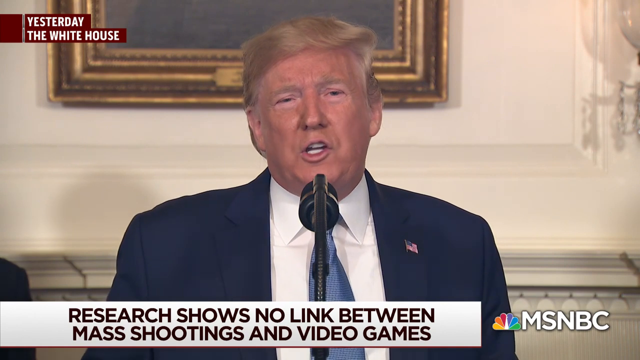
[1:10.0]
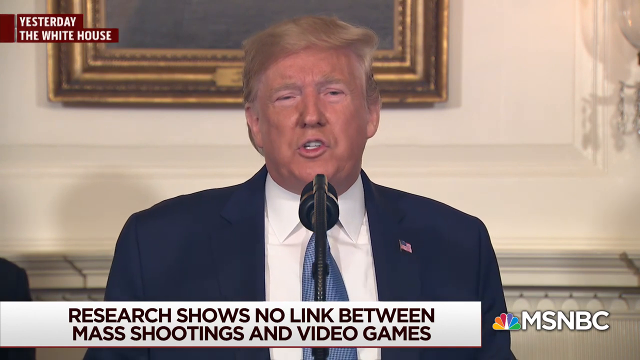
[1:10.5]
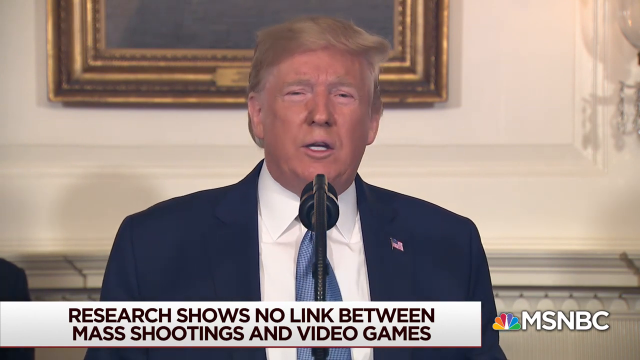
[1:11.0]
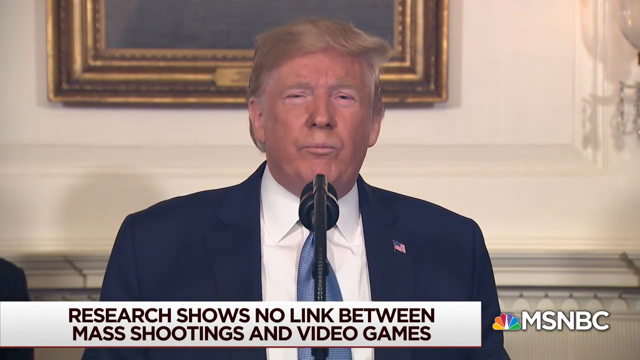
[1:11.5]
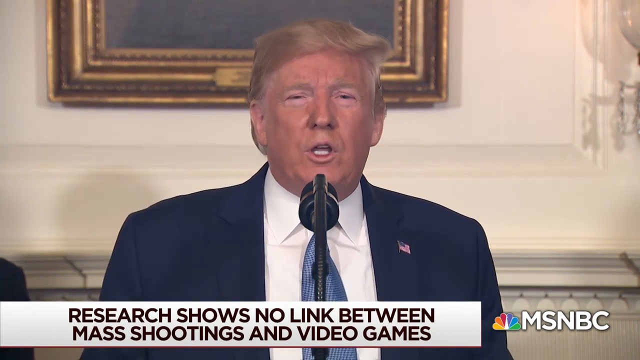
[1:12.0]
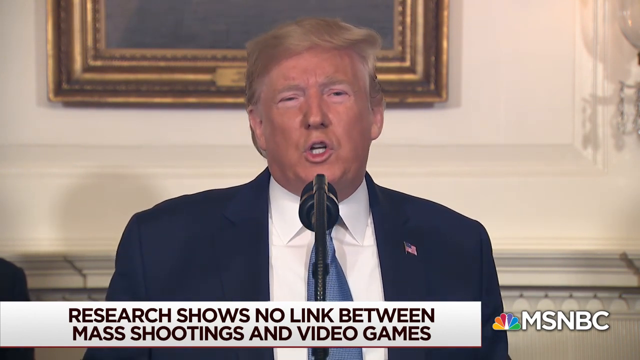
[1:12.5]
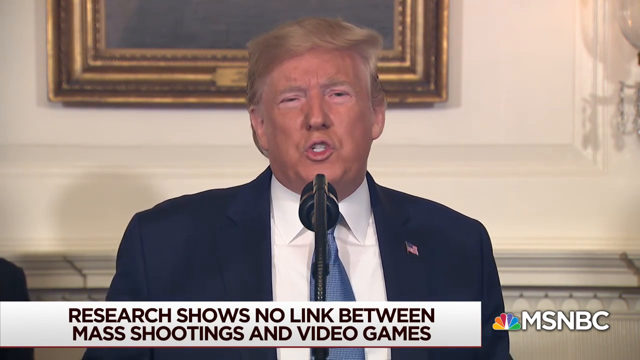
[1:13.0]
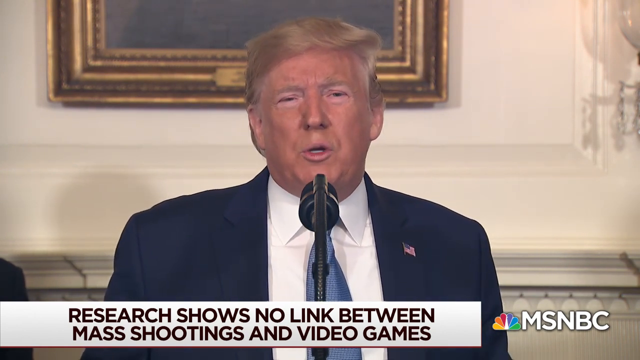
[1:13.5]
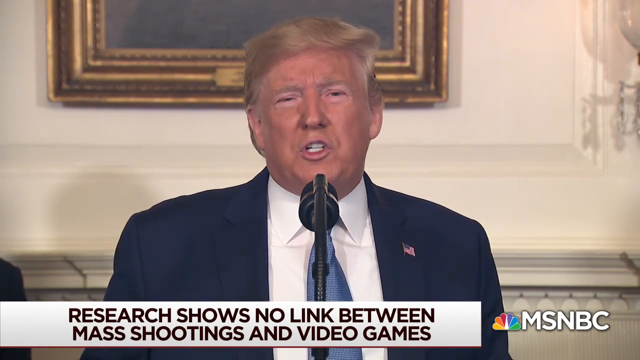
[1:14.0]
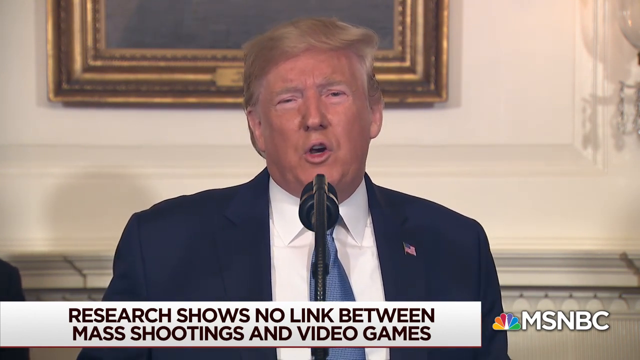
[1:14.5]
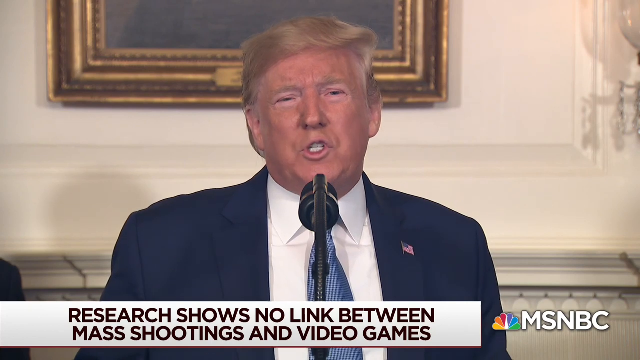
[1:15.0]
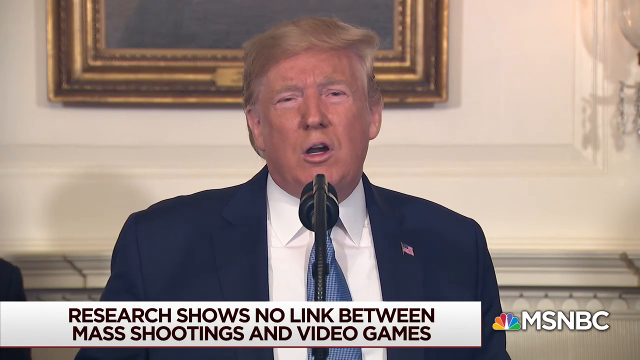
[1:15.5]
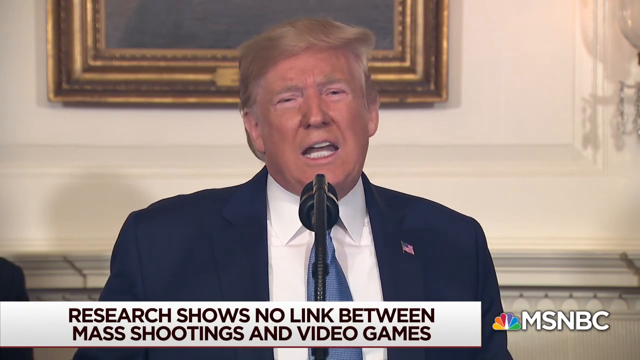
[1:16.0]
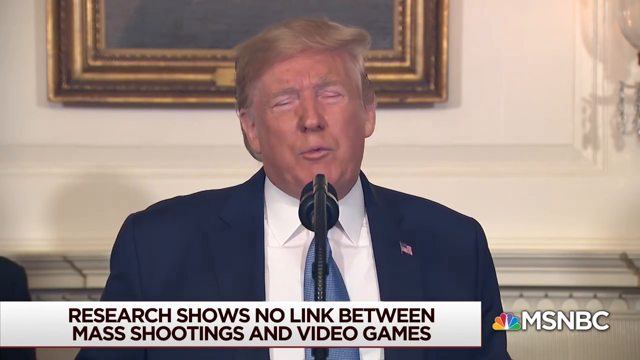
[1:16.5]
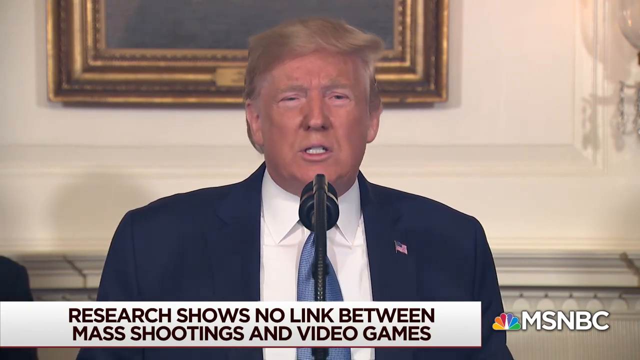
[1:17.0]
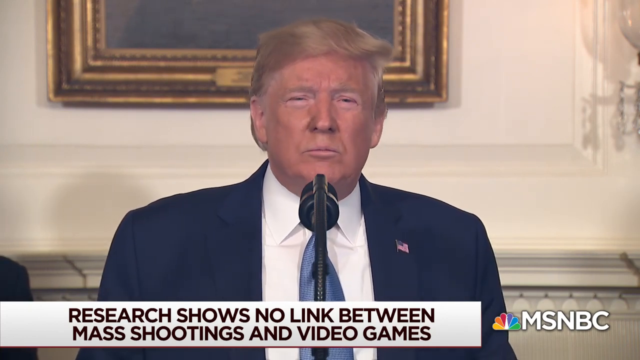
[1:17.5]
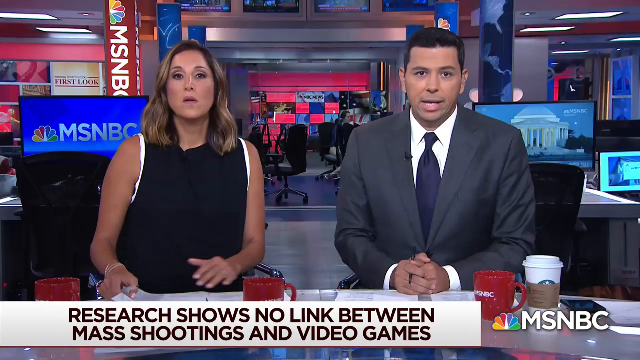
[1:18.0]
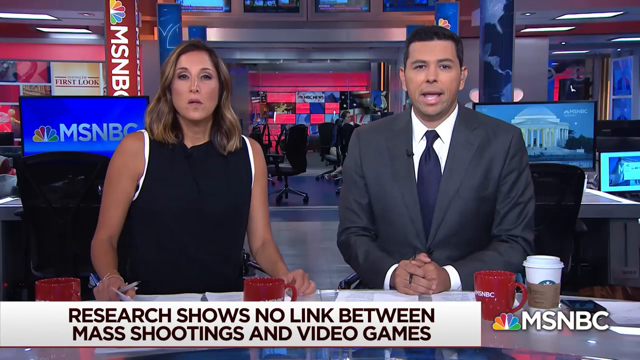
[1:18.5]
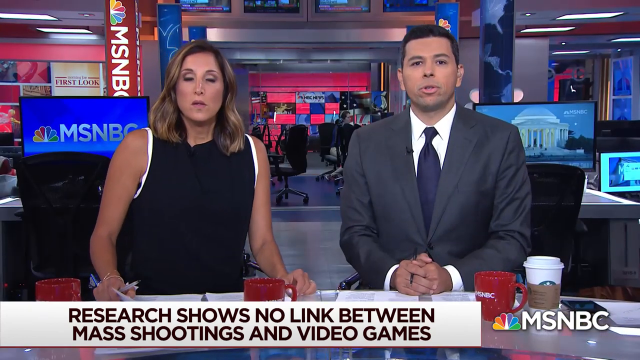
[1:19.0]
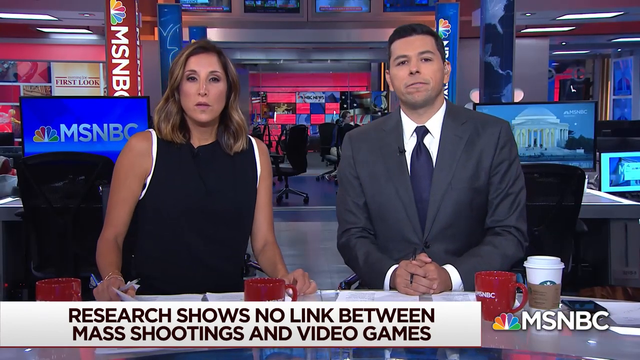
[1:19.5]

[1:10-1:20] The text "research shows no link between mass shootings and video games" is shown. President Donald Trump, wearing a blue suit, a blue tie and a white inner shirt, addresses the press on MSNBC. The two anchors of the TV station are also seen talking.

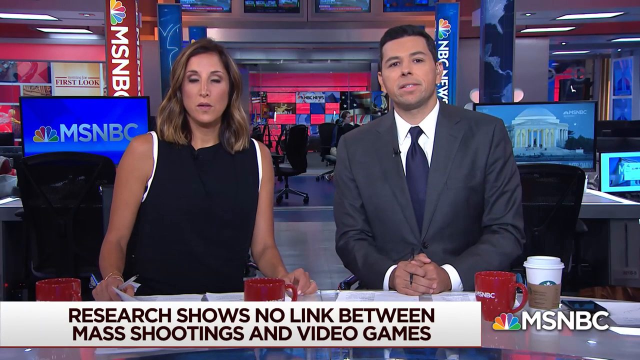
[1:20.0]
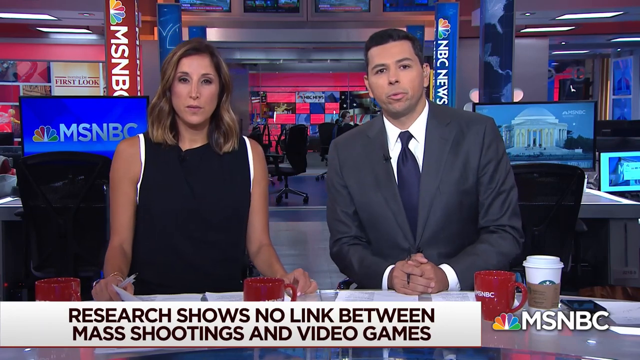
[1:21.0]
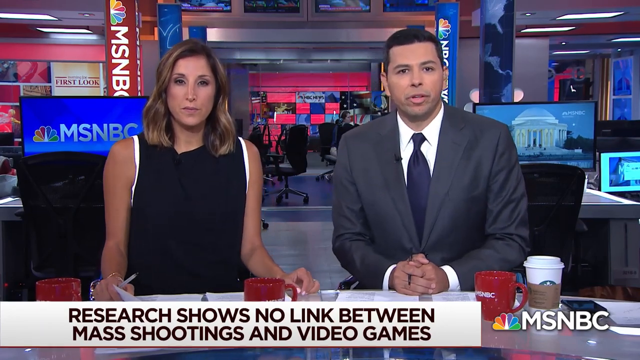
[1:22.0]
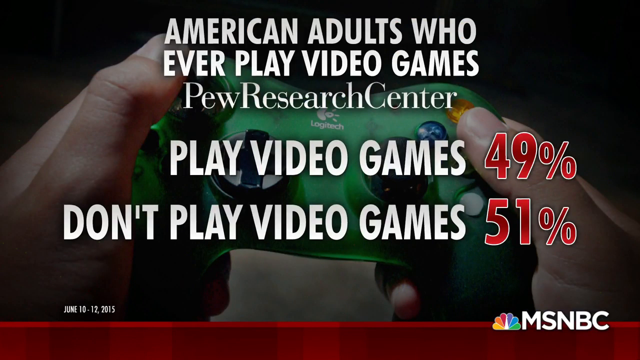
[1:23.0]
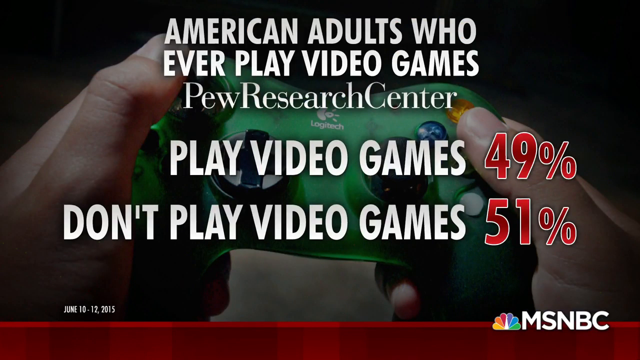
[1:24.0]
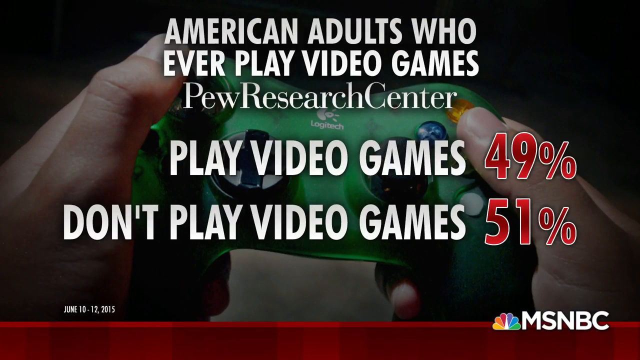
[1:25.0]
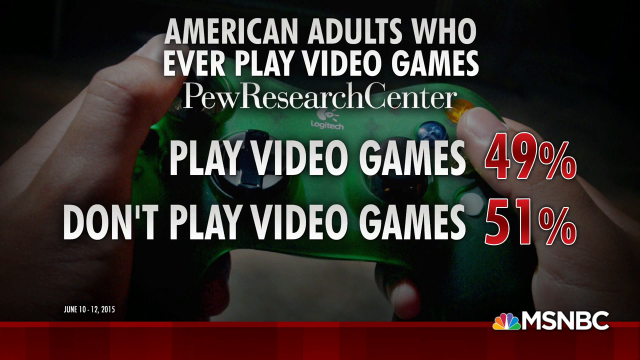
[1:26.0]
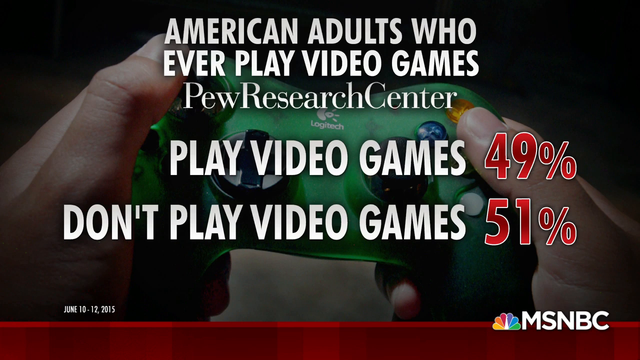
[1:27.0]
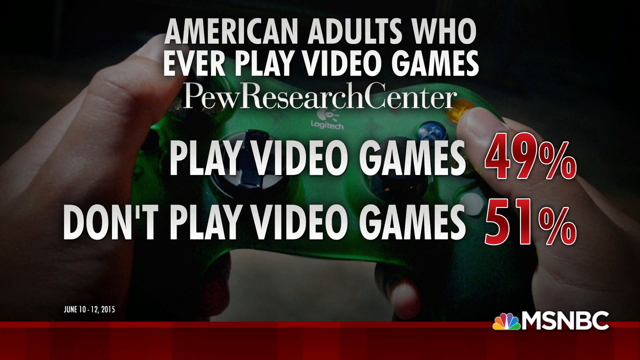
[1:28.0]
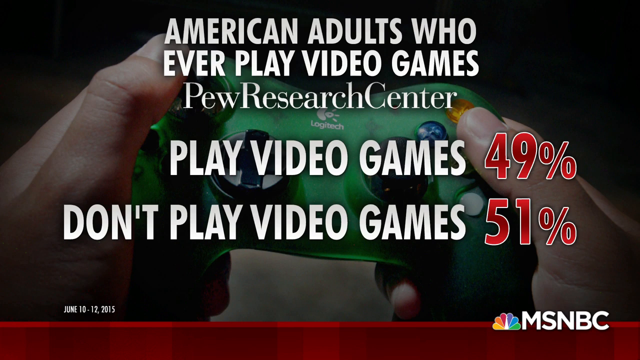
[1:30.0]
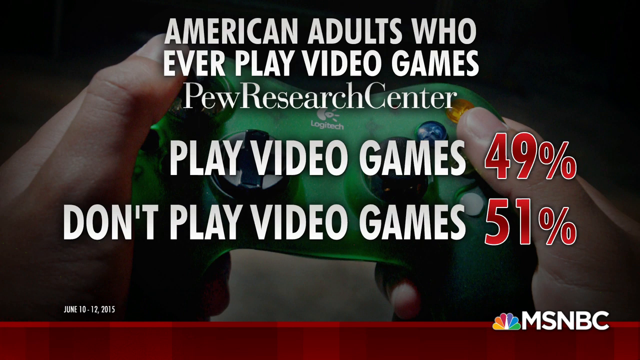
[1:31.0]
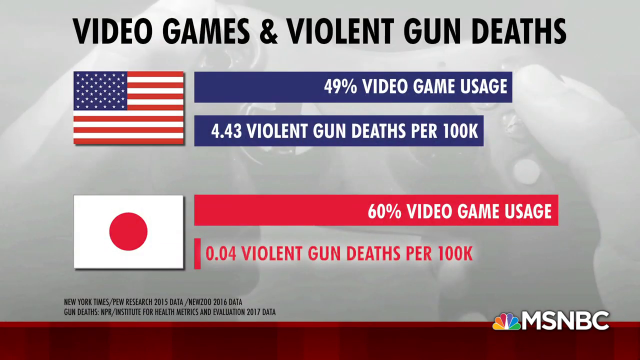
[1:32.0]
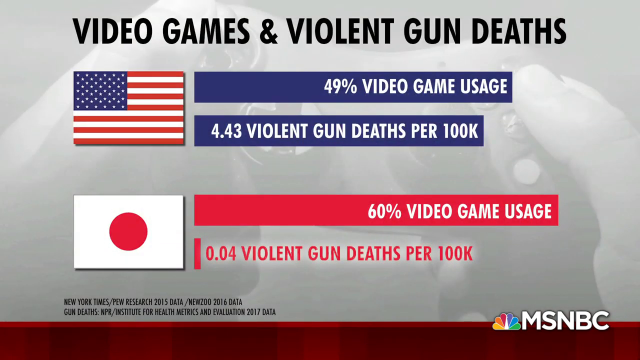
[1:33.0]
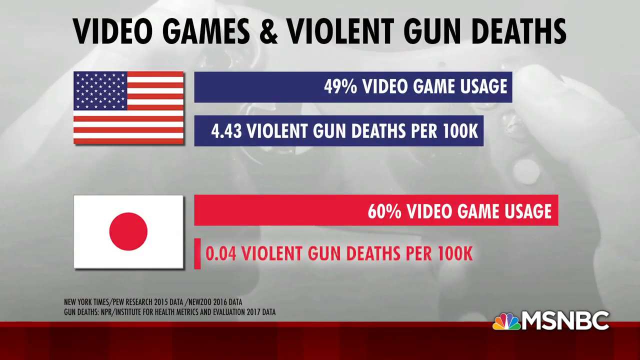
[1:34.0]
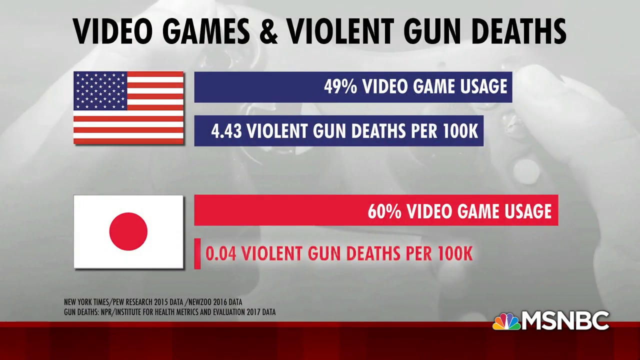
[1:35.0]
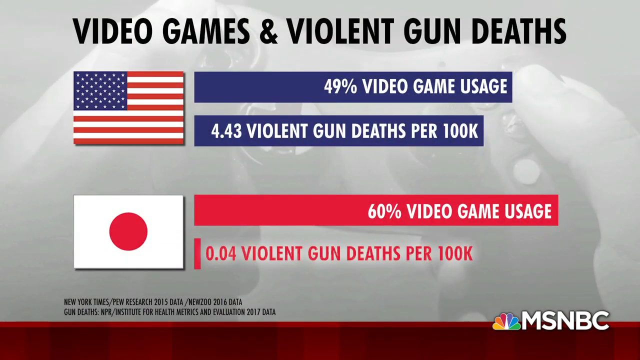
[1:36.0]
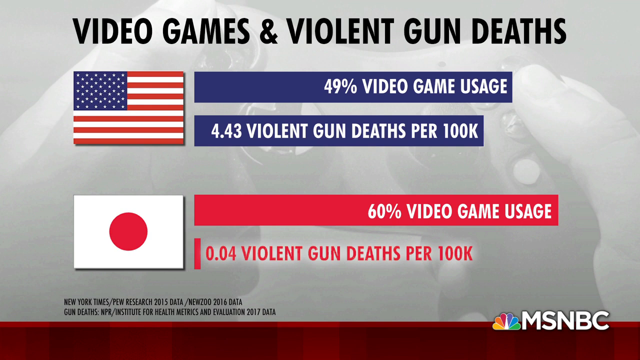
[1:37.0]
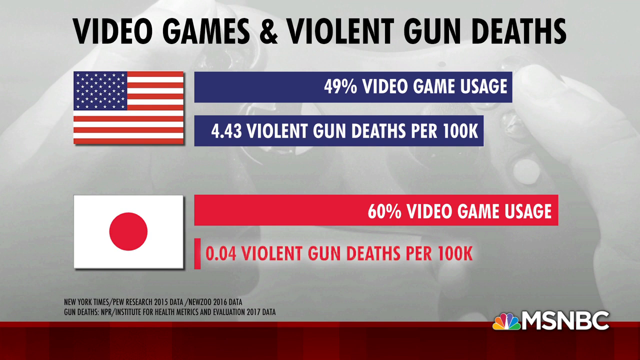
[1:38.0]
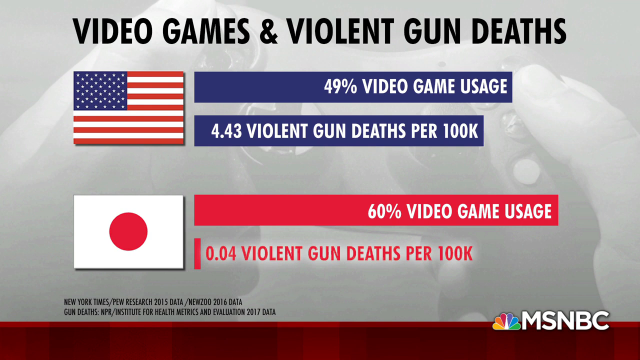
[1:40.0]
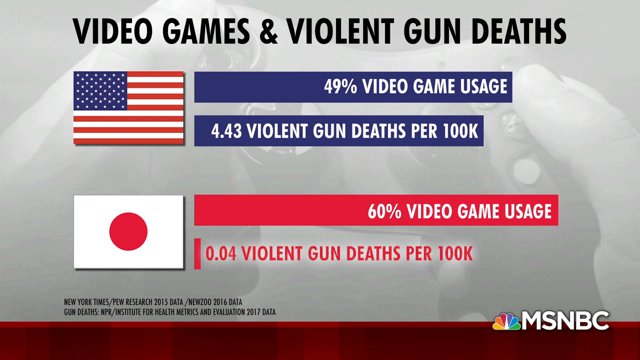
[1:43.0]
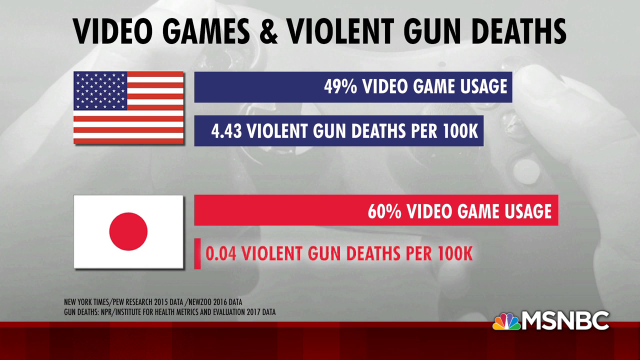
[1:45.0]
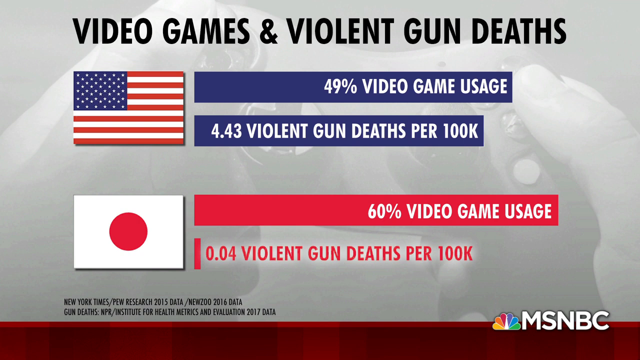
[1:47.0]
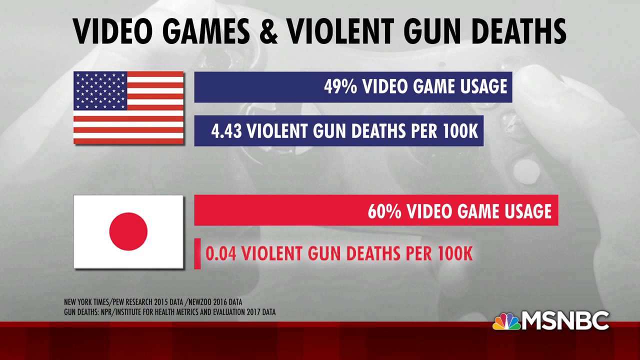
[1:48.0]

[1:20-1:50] A graphic compares video game players with violent gun deaths: "play video games" at 49% and "don't play video games" at 51%, along with figures for video game usage and violent gun deaths per 100k, including 4.43, 60% and 0.04, with one set of figures for Japan. The two anchors are shown presenting the news.